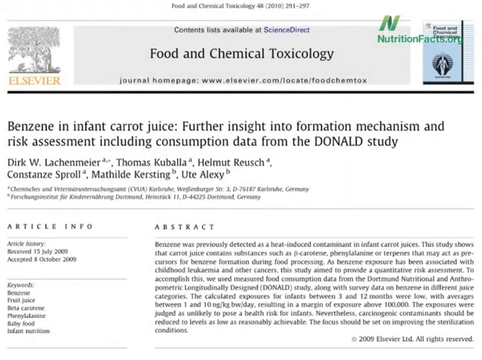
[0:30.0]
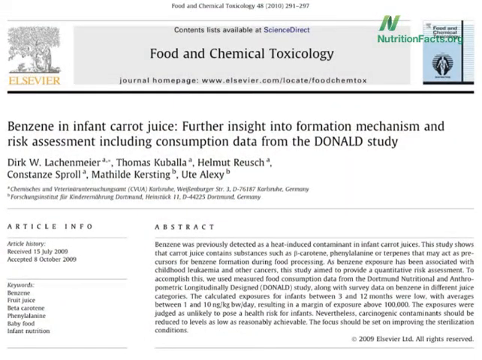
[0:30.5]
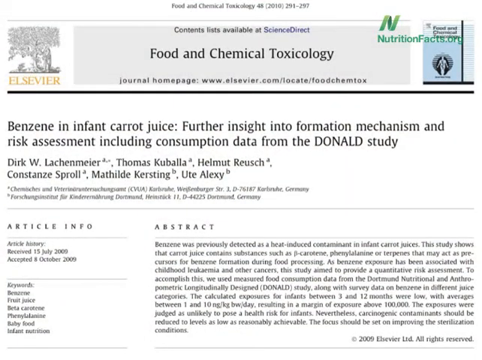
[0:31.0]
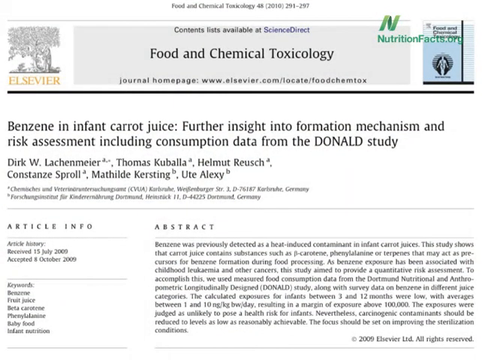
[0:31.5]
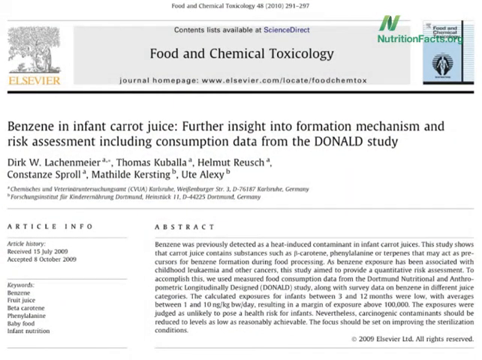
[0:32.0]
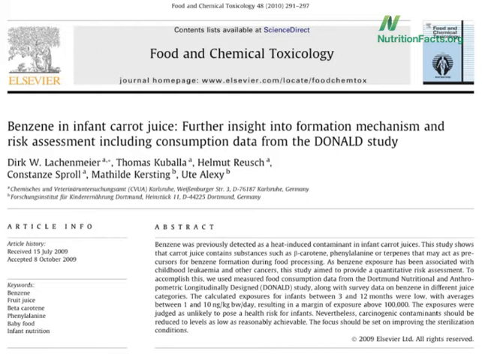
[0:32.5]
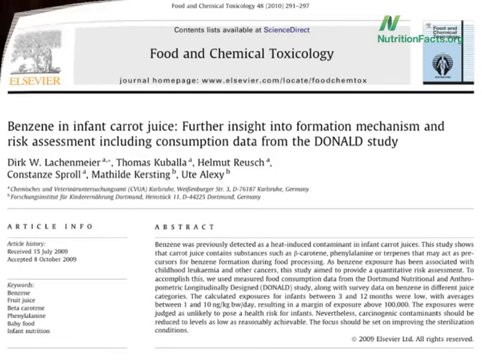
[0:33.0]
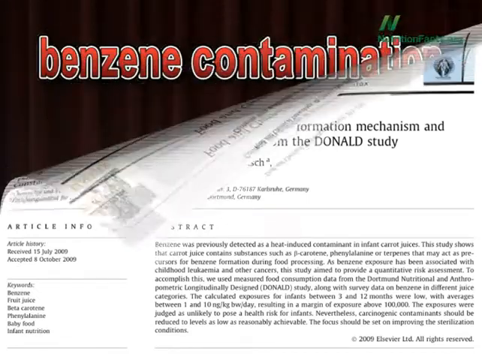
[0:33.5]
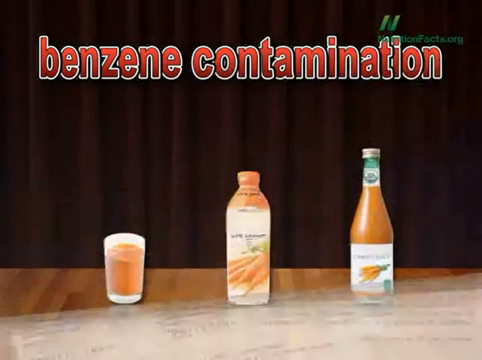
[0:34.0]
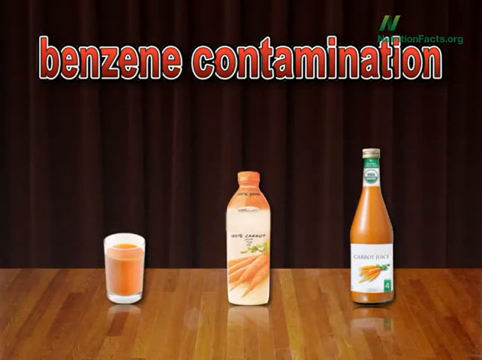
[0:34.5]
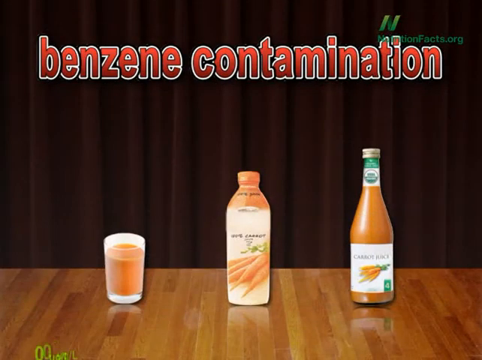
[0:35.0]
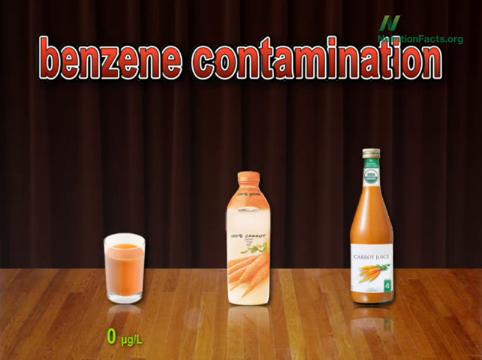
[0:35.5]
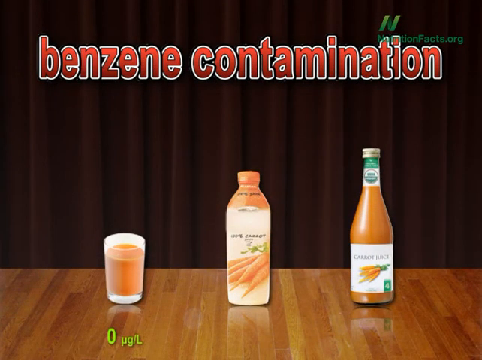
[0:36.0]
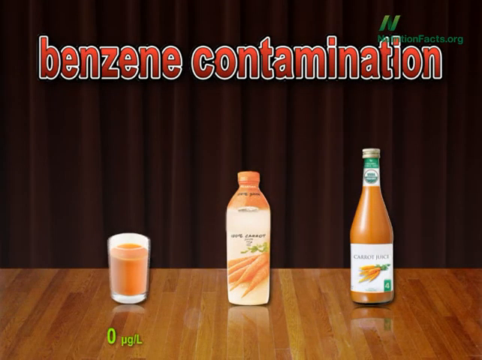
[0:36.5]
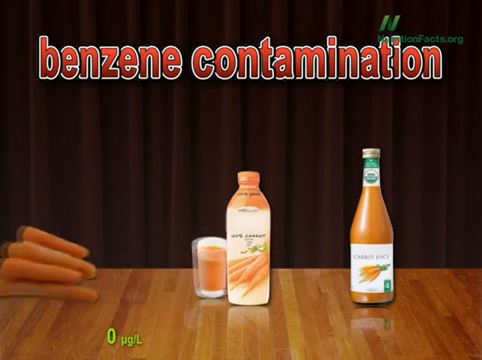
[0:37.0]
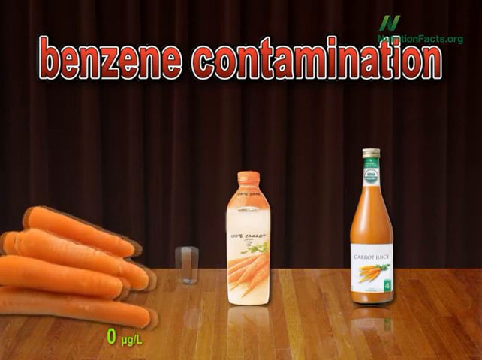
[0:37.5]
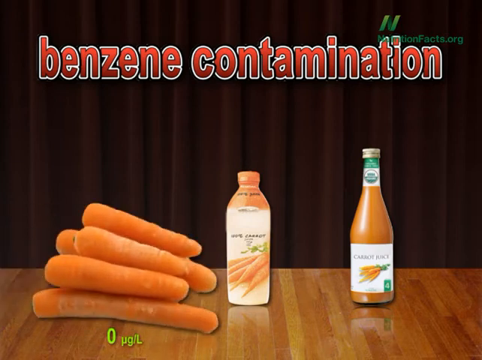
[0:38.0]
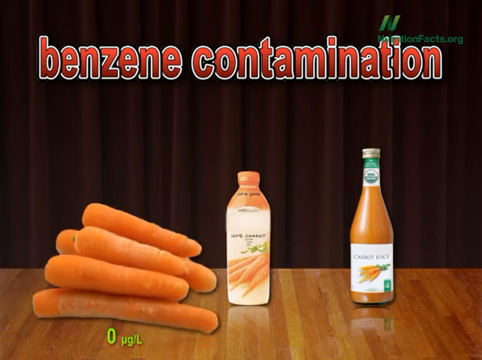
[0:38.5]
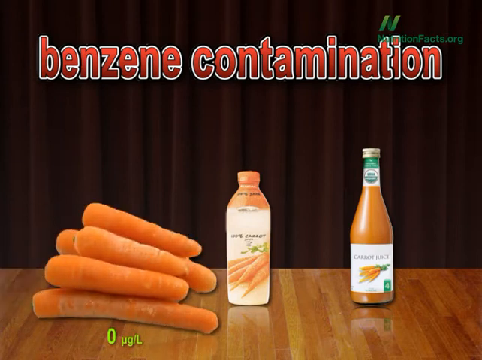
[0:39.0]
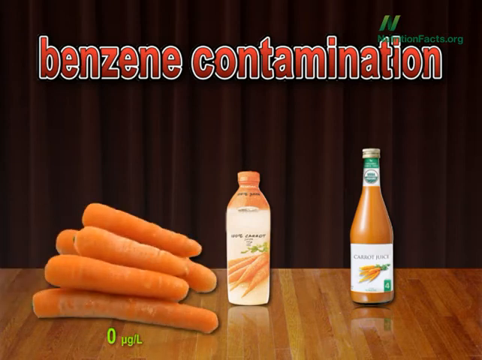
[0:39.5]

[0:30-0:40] The food and chemical toxicology article titled "Benzene in Infant Carrot Juice further insight into the formation mechanism and risk assessment including consumption data from the Donald's study" remains on screen, with the abstract reading: "Benzene was previously detected as a heat-induced contaminant in infant carrot juices. As benzene exposure has been associated with childhood leukemia and other cancers, this study aimed to provide a quantitative risk assessment." The article then disappears, and the title "benzene contamination" appears with a table below holding a glass of carrot juice, a bottle of carrot juice and another bottle of carrot juice. The glass of carrot juice is then replaced with a bunch of raw carrots on the table.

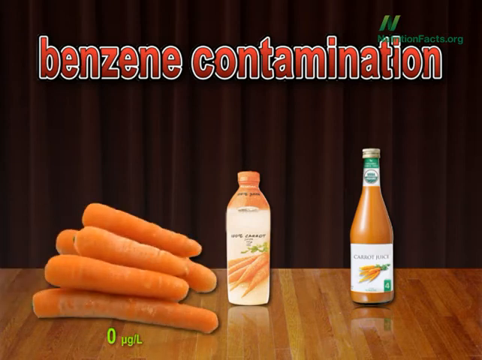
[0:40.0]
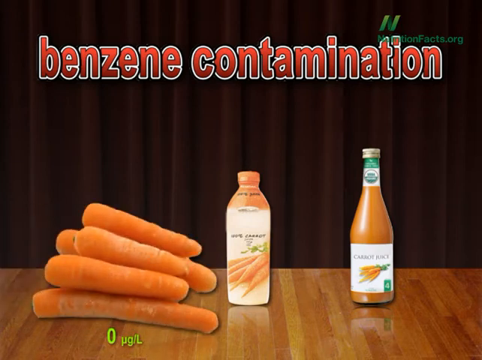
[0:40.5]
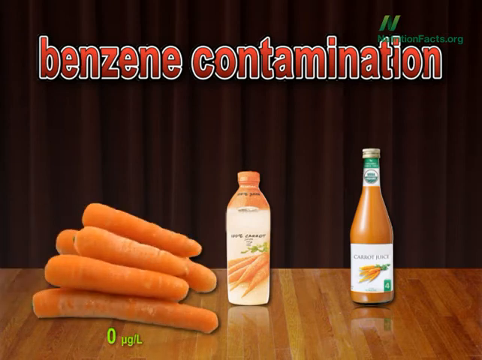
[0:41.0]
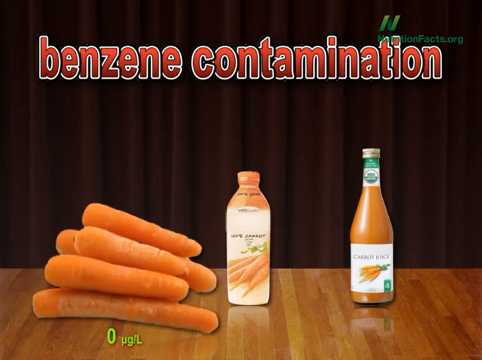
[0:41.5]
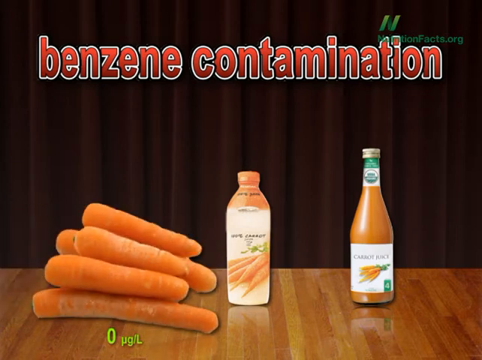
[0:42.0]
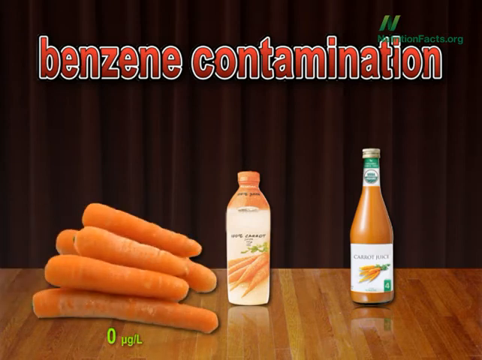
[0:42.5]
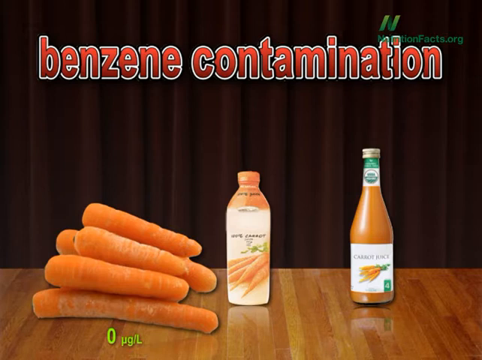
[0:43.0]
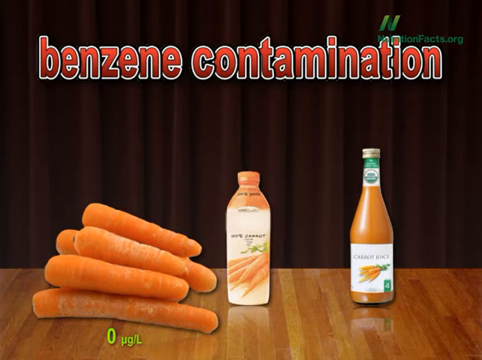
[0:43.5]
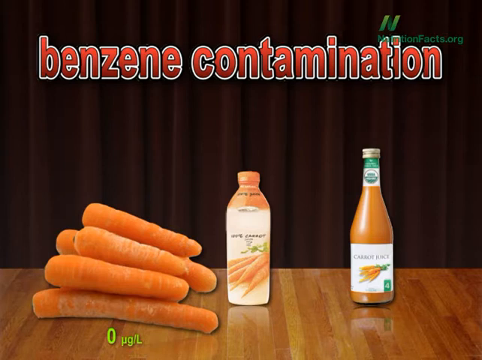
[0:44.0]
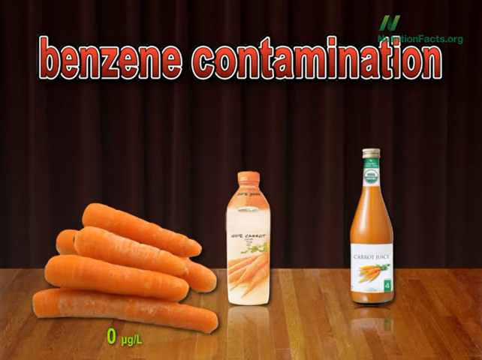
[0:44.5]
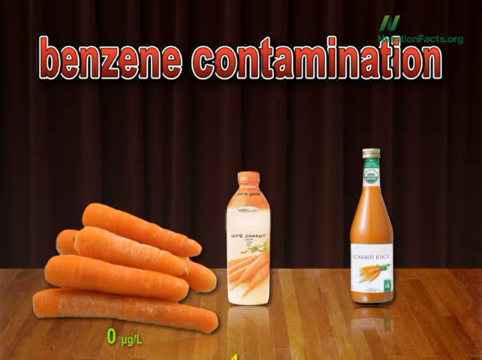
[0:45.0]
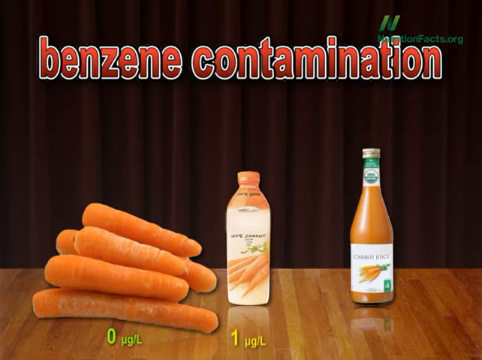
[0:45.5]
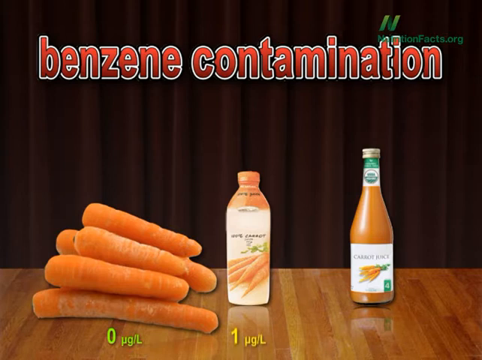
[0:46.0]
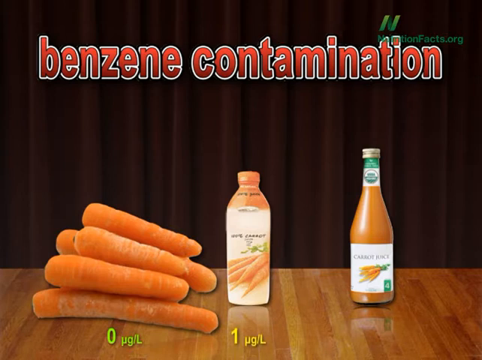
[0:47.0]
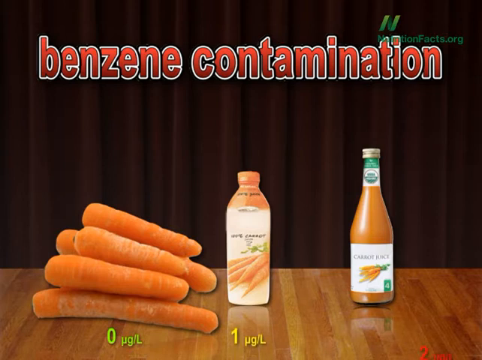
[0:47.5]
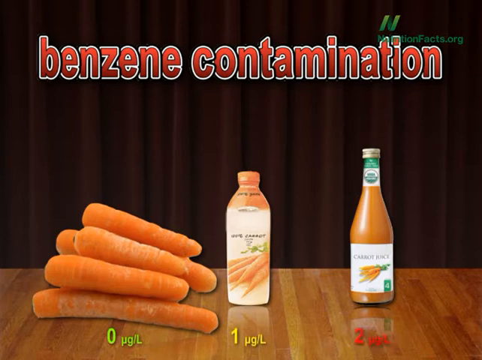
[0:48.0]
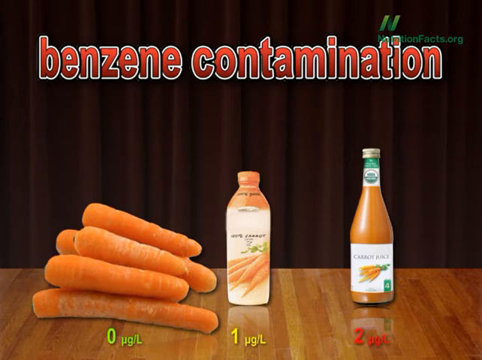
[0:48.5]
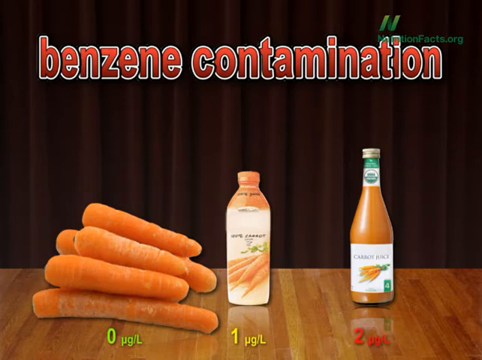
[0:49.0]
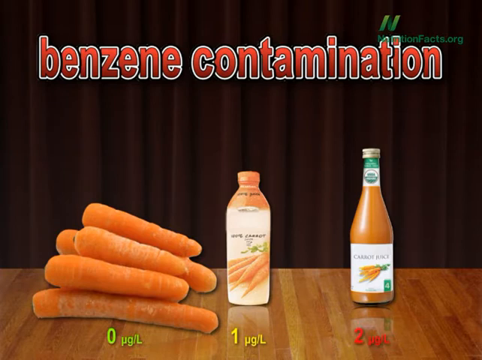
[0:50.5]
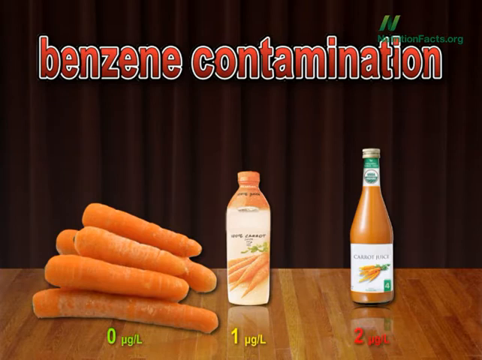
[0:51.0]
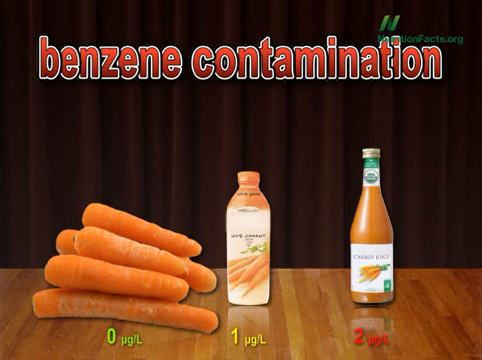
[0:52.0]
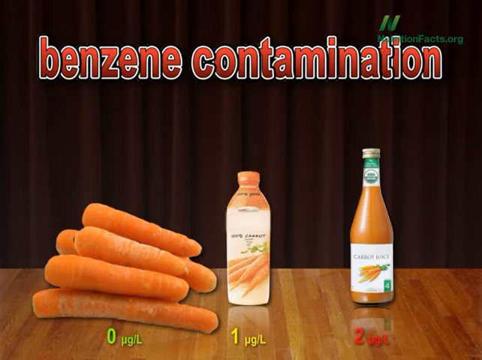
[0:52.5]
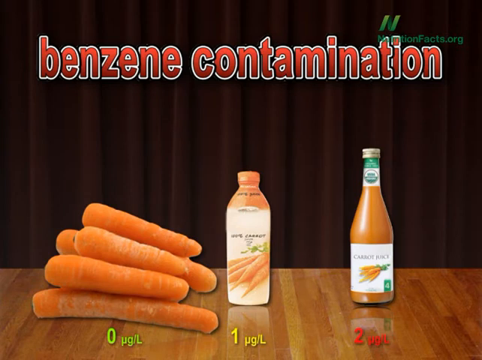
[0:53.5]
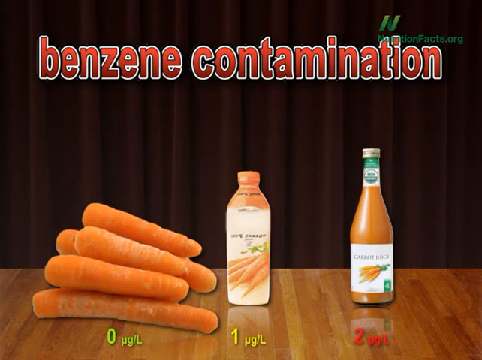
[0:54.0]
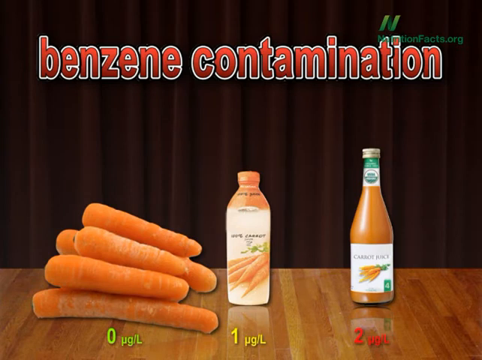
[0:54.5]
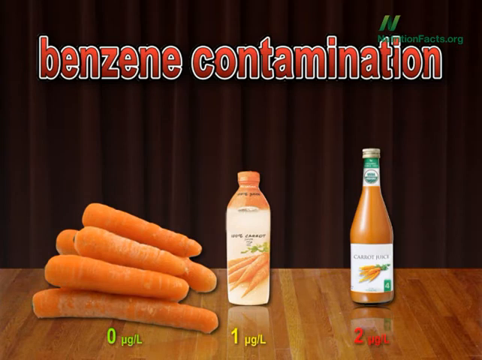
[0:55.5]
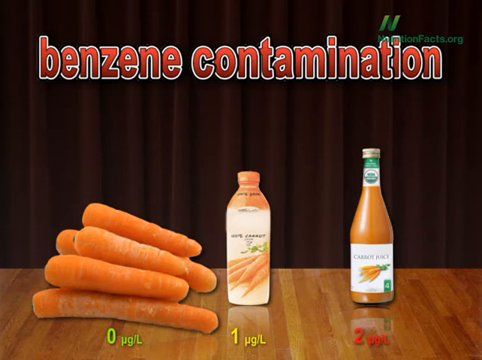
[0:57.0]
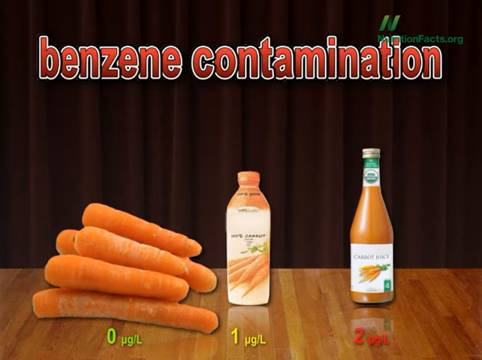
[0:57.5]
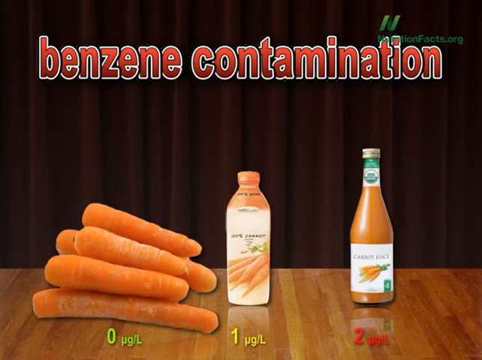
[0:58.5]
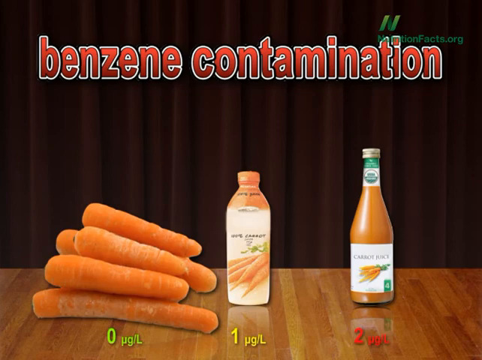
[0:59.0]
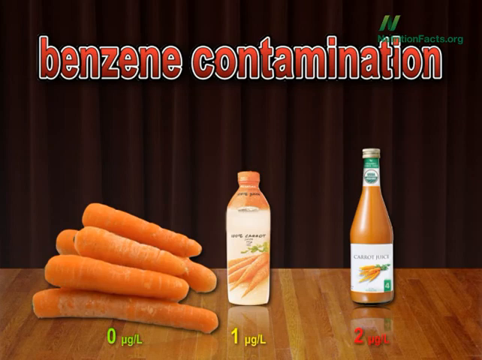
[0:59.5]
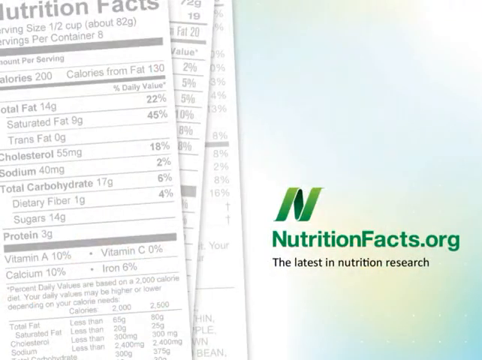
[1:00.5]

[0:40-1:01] The title "Benzene Contamination" stays above a tabletop with a bunch of raw carrots on the right side of the tabletop. Next to the raw carrots is a plastic bottle of carrot juice, and next to that is a glass bottle of carrot juice. The background behind the title is a darkened version of the red curtains. Numbers appear under the items on the table: "0 UG per litre" in yellow writing under the raw carrots, "1 UG per litre" in yellow writing under the plastic bottle of carrot juice, and "2 UG per litre" in red writing under the glass bottle of carrot juice. This appears to suggest that raw, unprocessed carrots are better for health, with no benzene, and that the plastic bottle of carrot juice seems better than the glass bottle. The video then ends.